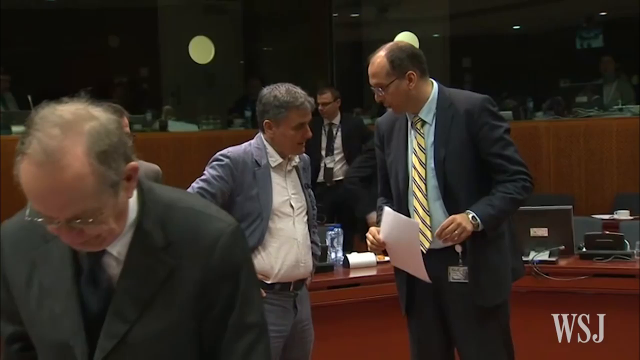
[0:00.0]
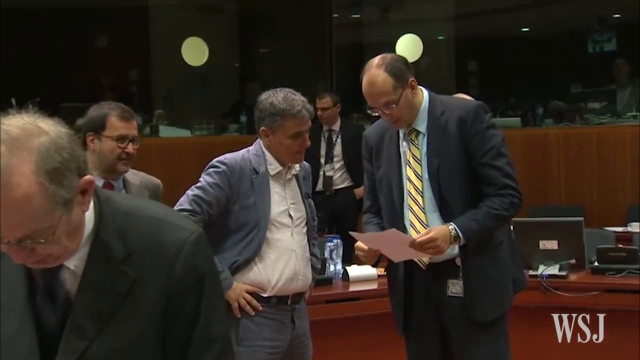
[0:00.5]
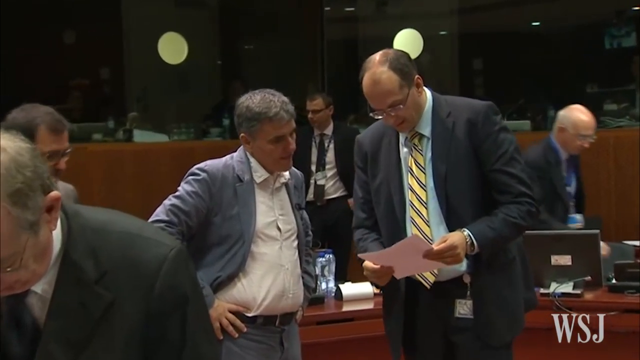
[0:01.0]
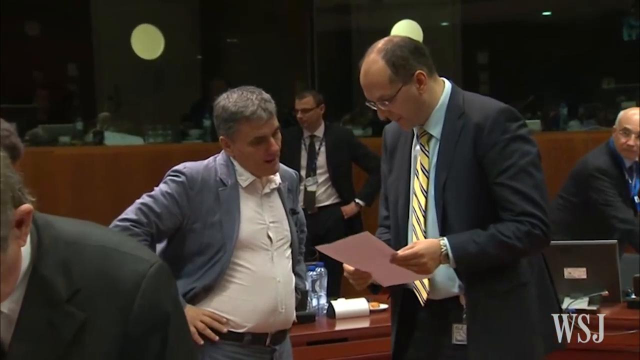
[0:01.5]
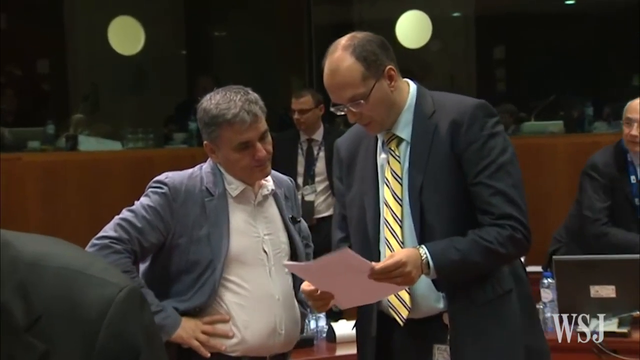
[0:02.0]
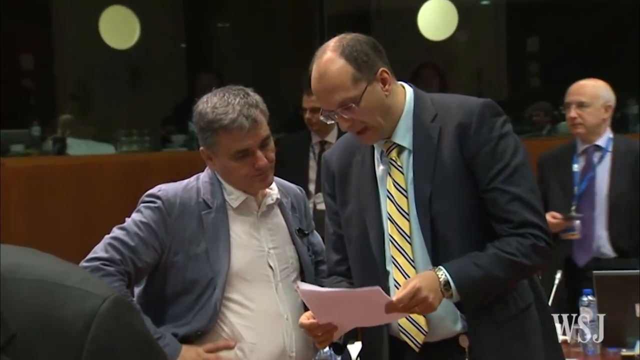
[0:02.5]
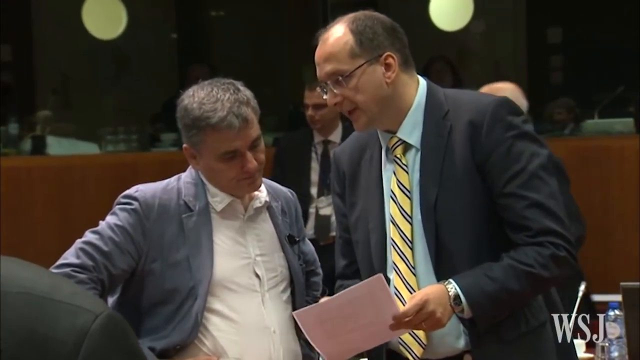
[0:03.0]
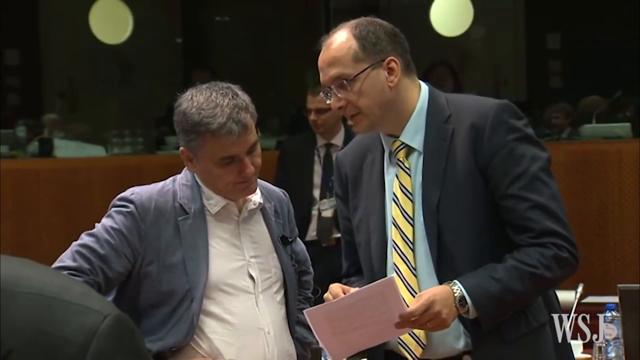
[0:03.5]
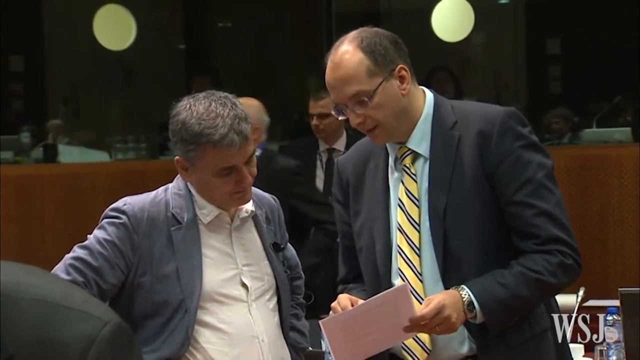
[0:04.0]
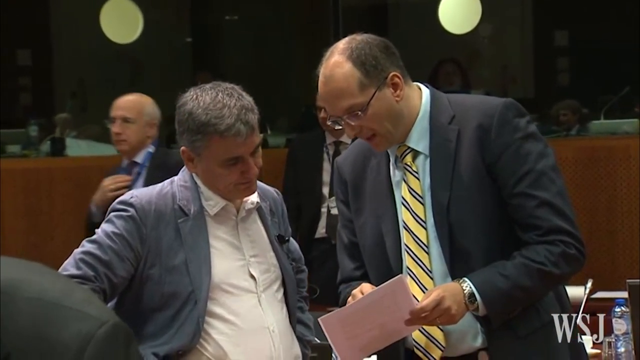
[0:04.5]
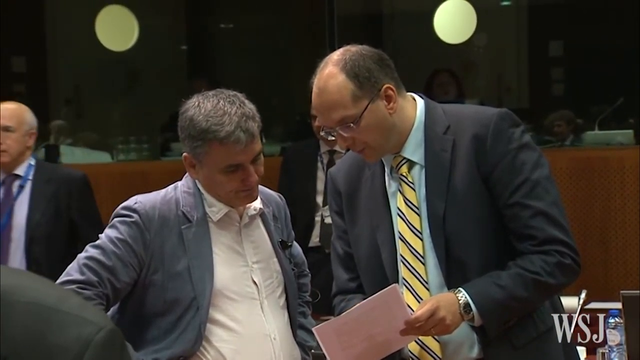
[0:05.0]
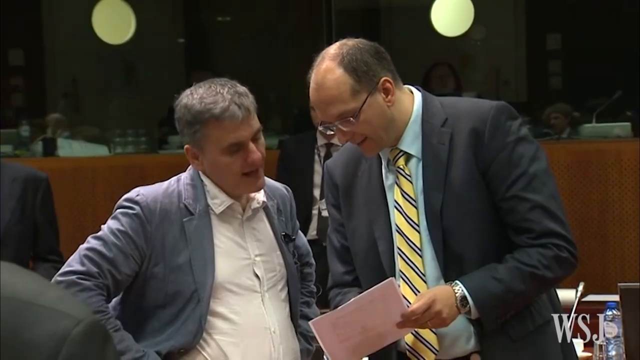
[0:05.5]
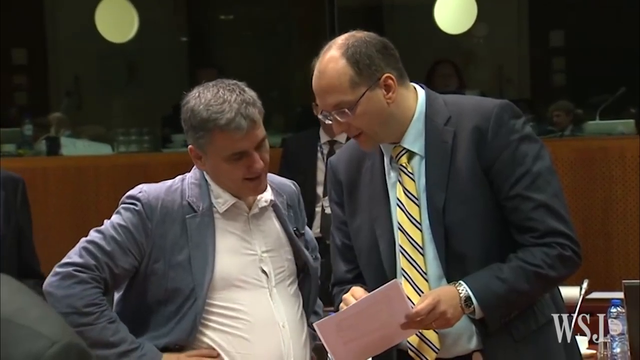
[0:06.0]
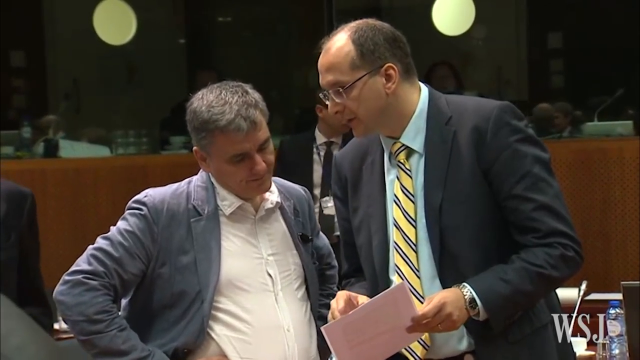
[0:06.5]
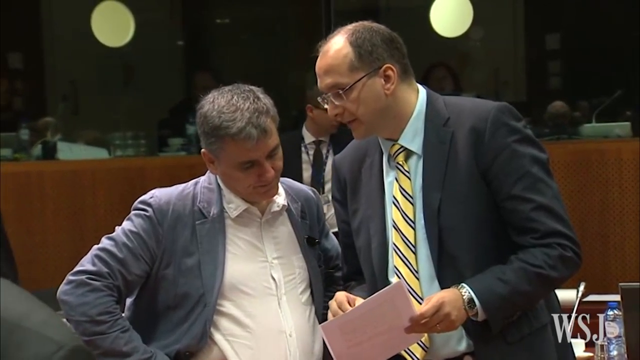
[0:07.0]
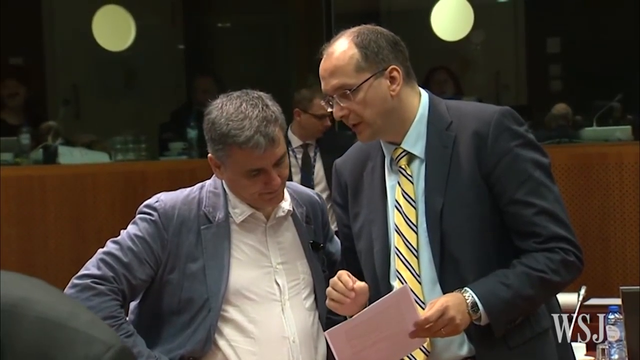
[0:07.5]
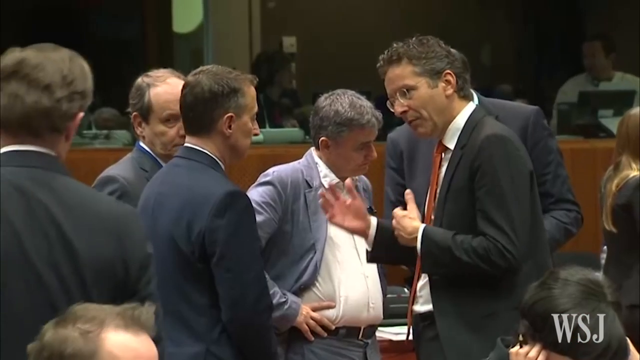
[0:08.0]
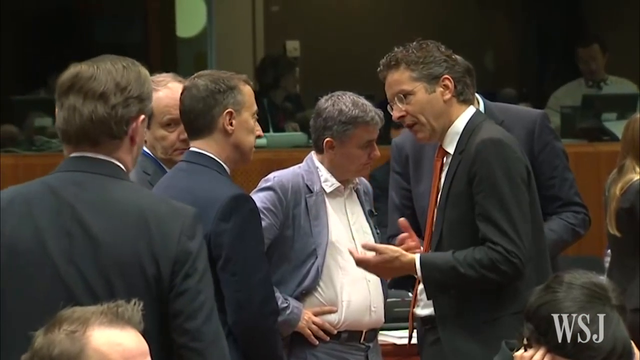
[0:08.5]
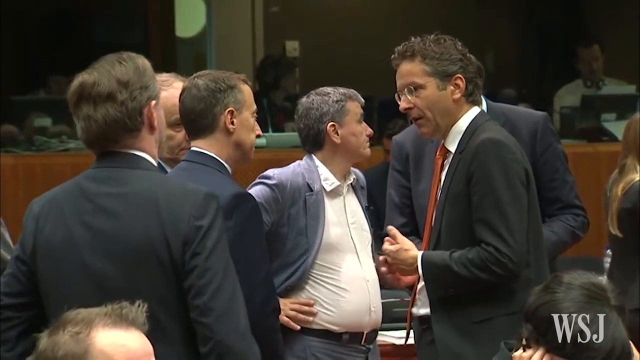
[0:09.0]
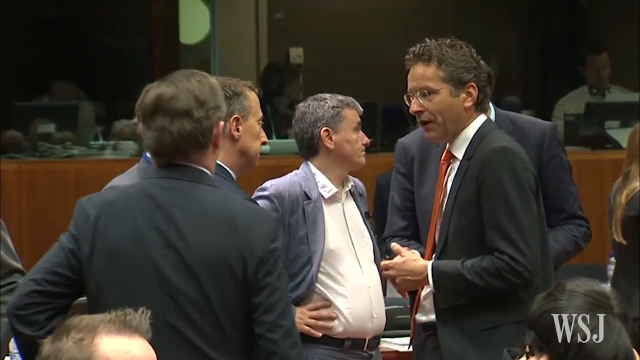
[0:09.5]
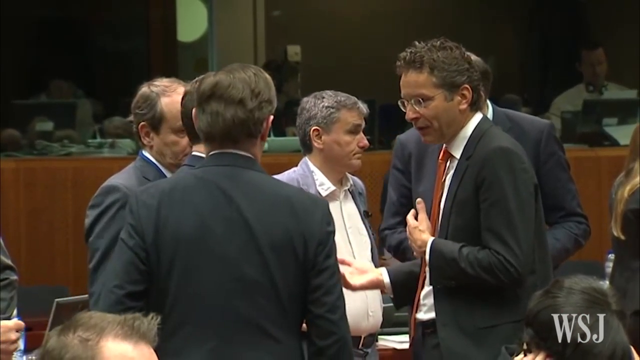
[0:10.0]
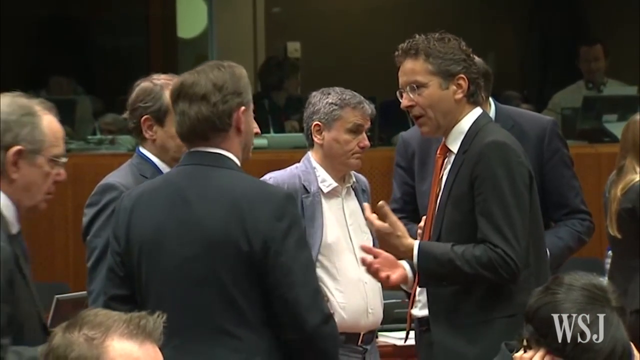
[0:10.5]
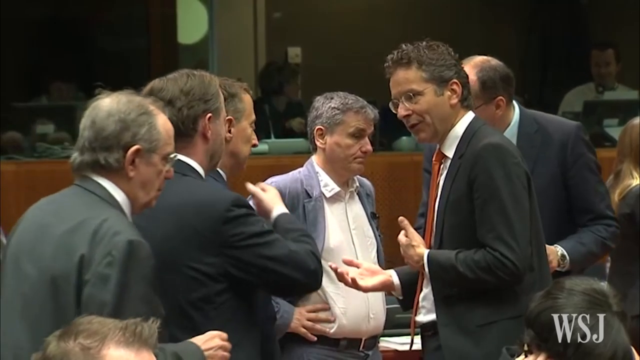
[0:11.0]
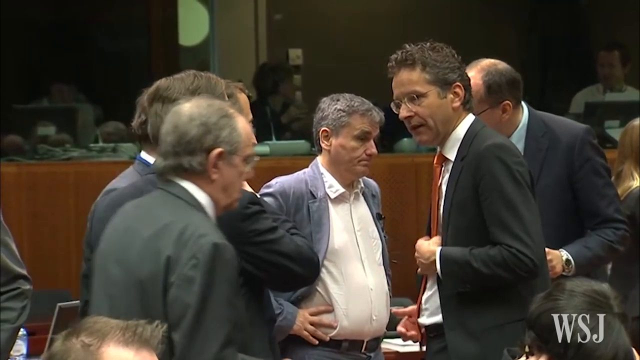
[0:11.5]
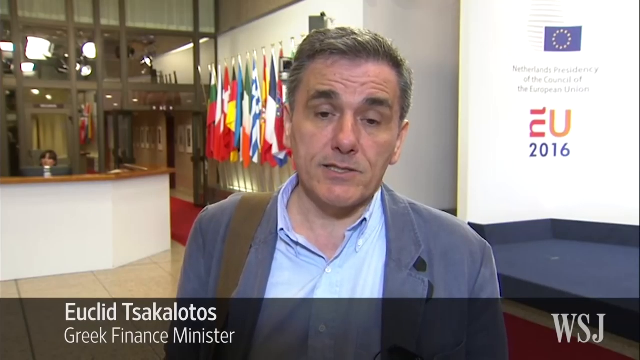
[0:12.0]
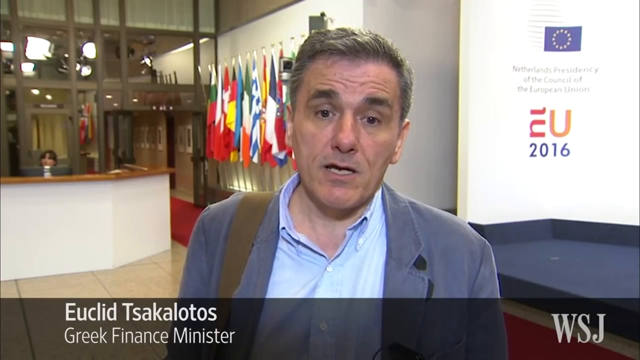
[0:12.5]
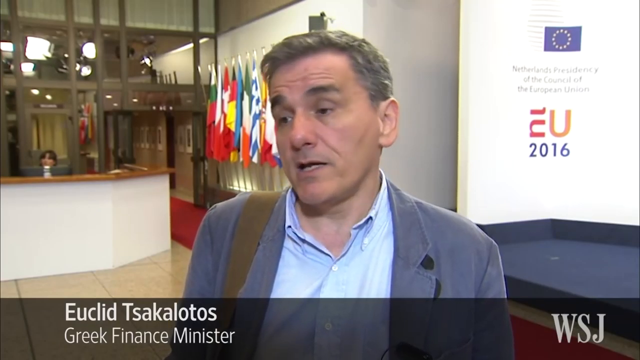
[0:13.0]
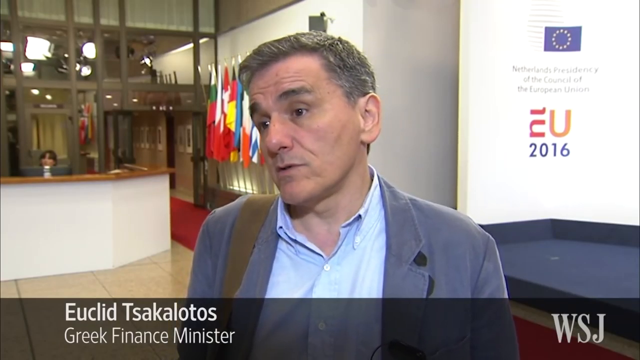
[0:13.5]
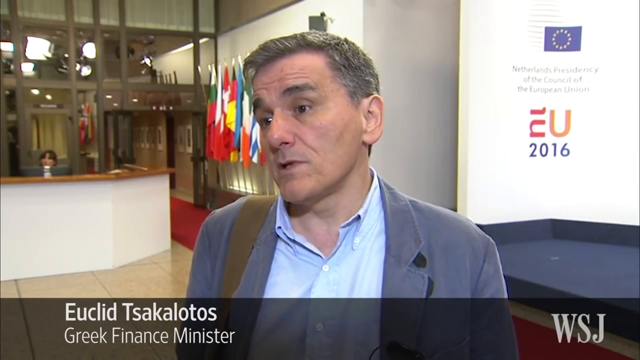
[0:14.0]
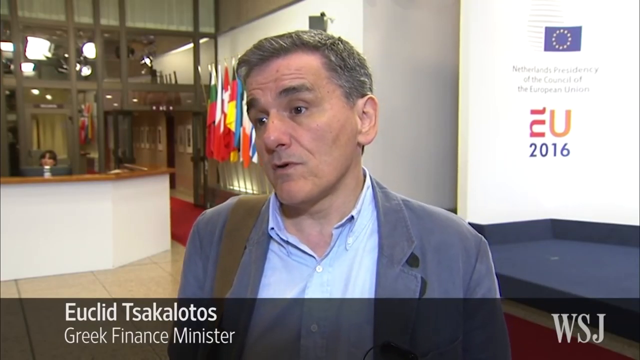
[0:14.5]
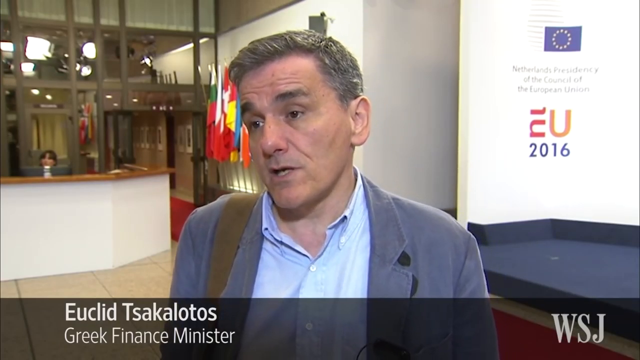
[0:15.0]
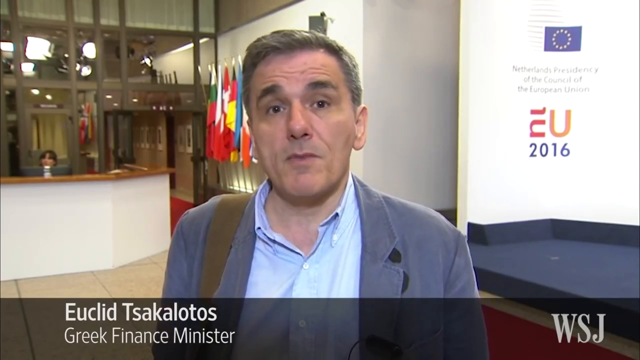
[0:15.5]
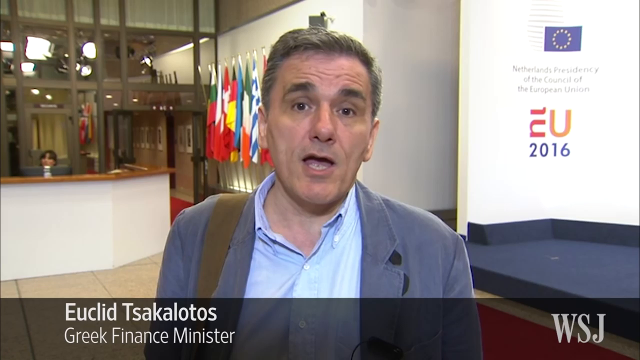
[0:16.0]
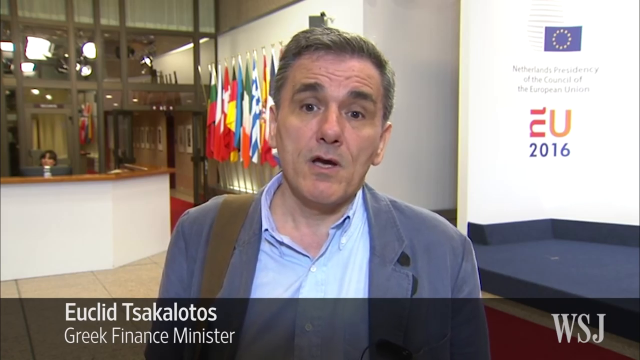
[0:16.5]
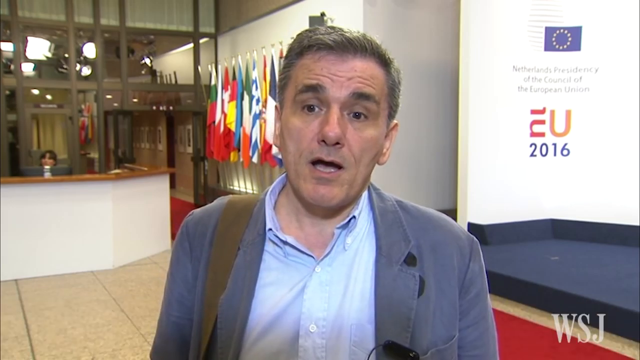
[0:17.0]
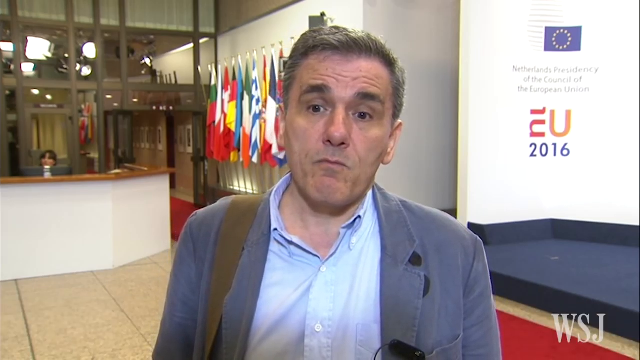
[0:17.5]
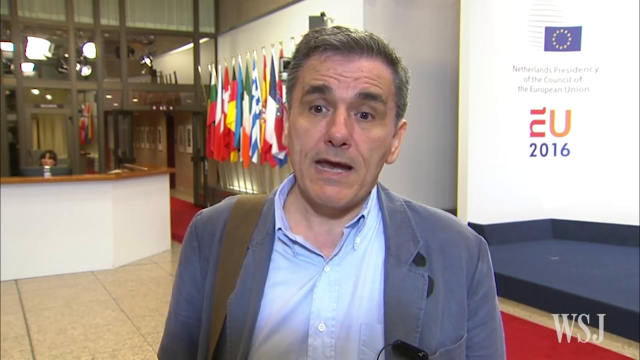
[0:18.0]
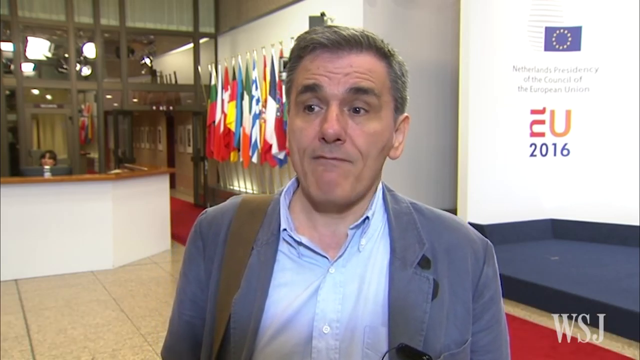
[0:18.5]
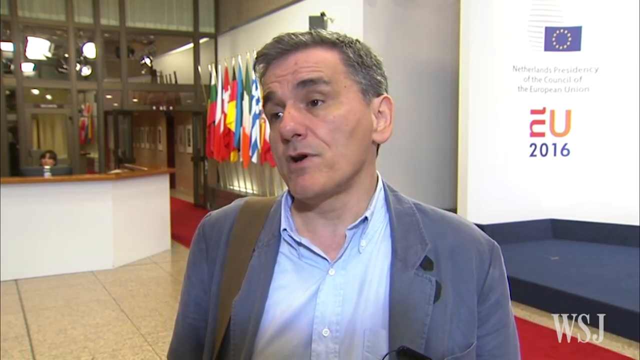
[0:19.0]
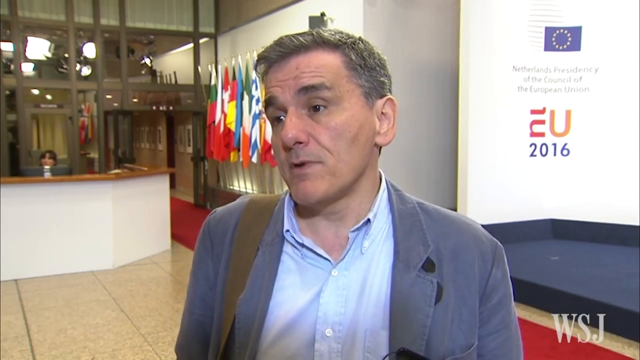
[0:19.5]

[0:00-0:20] Two people are framed in the center of the screen. The man on the left wears a light blue jacket and a white shirt, while the one on the right wears a dark jacket, a light blue shirt and a yellow and black tie with diagonal stripes. Other people, also in quite formal clothes, are added to the frame. Then a man is framed wearing a blue jacket and a light blue shirt, with a green band on one of his shoulders. He occupies the central part of the screen and speaks. Behind him are several elements: a white and brown desk on the left and flags of different colors next to a white wall. In the background there is also a rather high dark brown structure with stained glass windows and a door at the bottom. There also seems to be a red carpet.